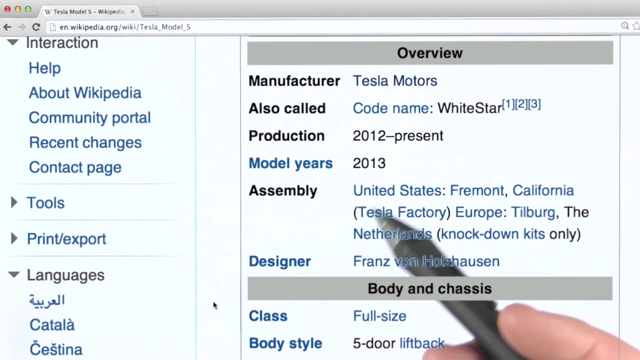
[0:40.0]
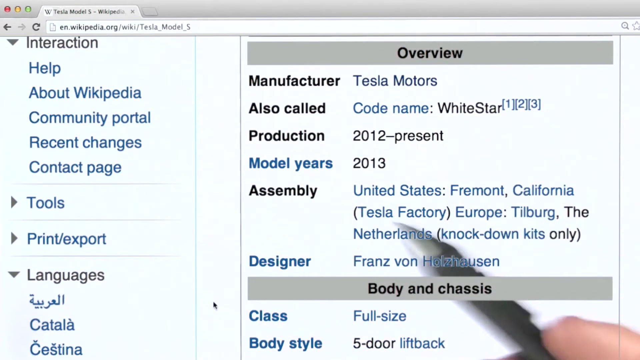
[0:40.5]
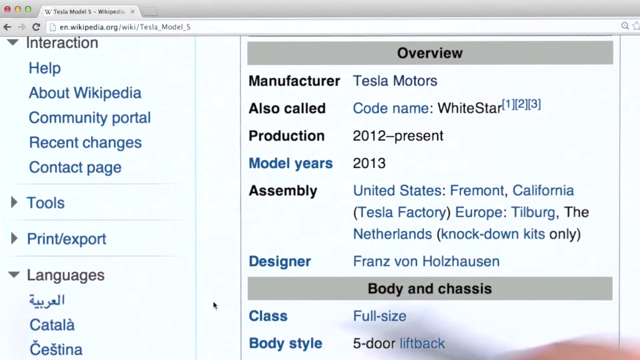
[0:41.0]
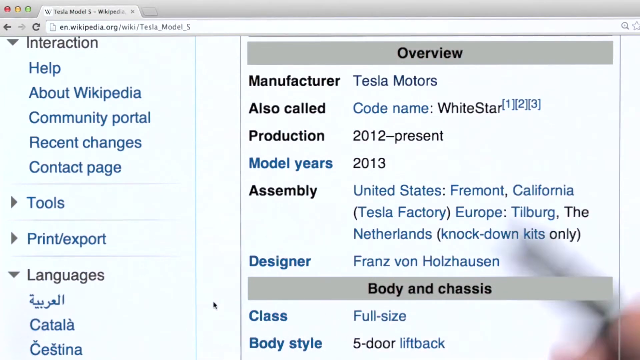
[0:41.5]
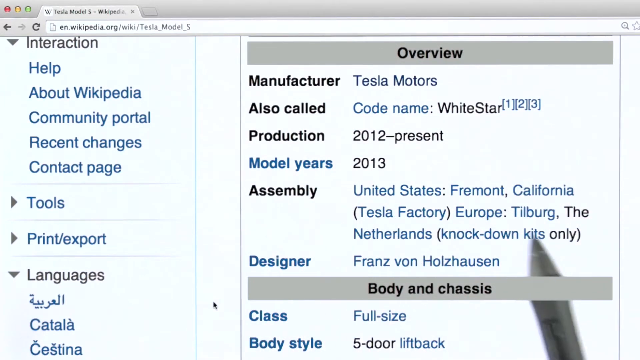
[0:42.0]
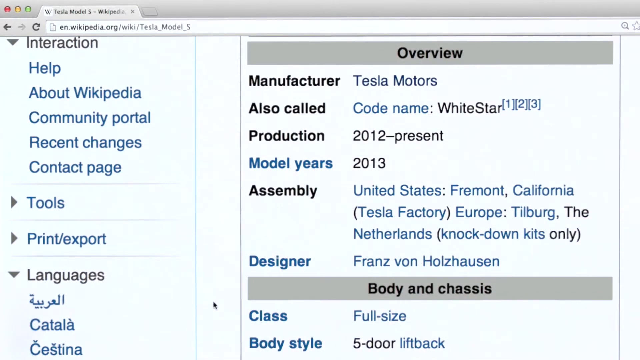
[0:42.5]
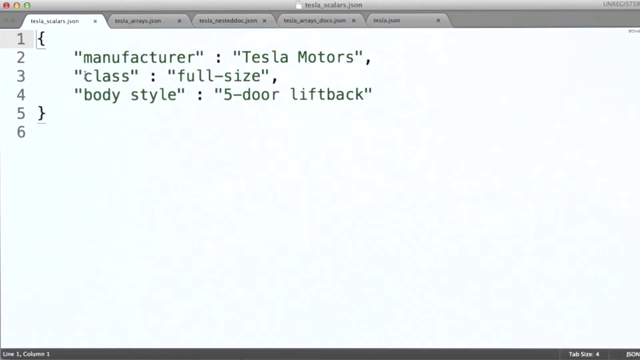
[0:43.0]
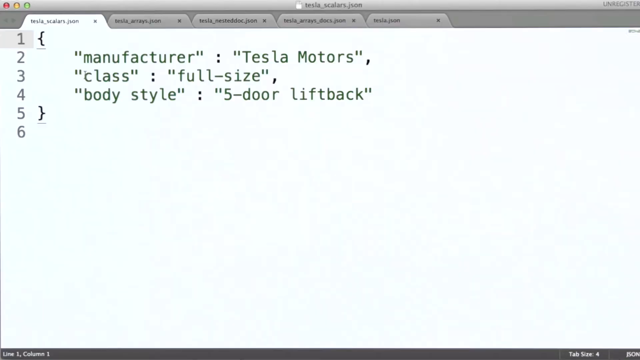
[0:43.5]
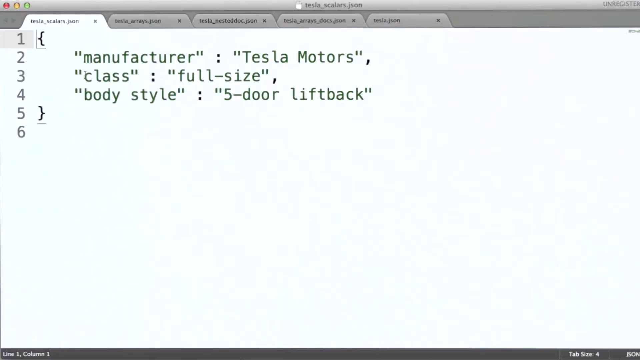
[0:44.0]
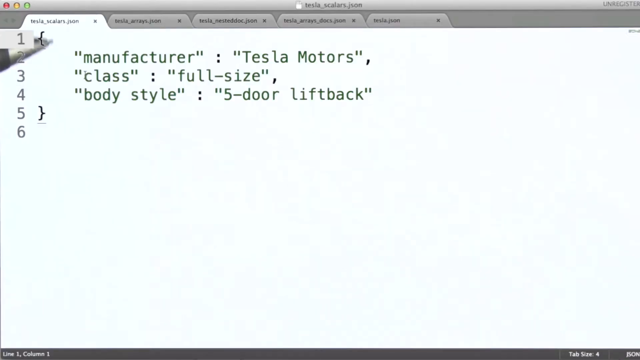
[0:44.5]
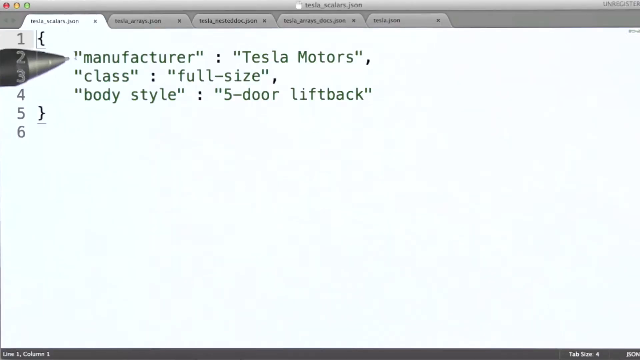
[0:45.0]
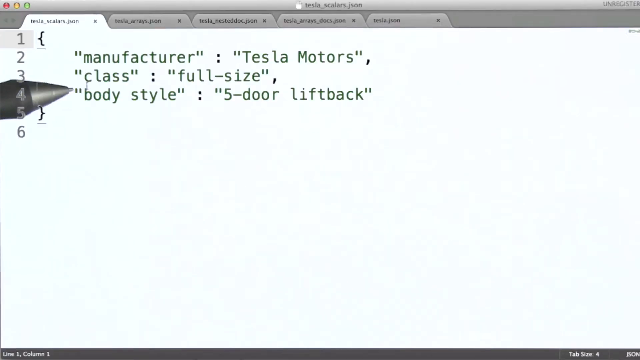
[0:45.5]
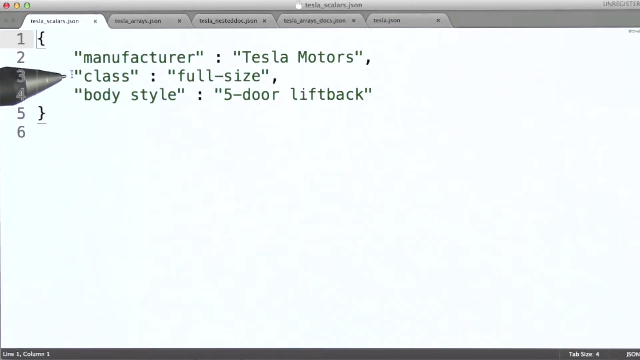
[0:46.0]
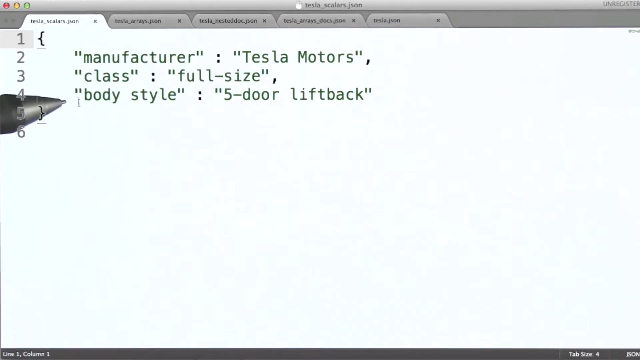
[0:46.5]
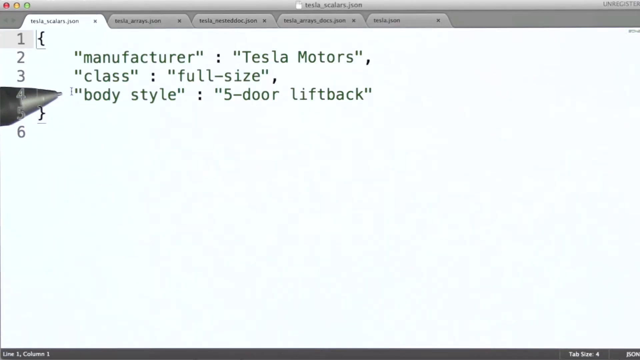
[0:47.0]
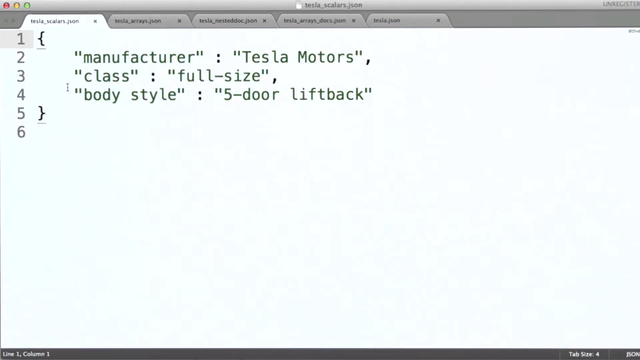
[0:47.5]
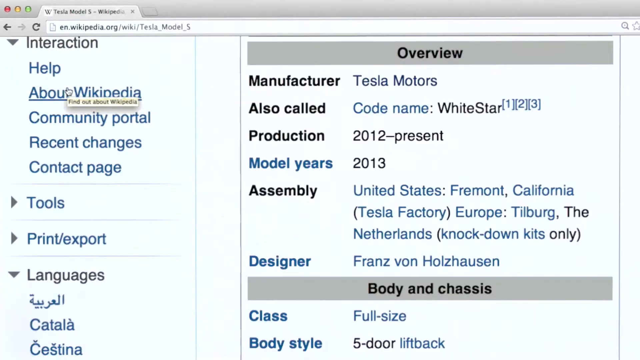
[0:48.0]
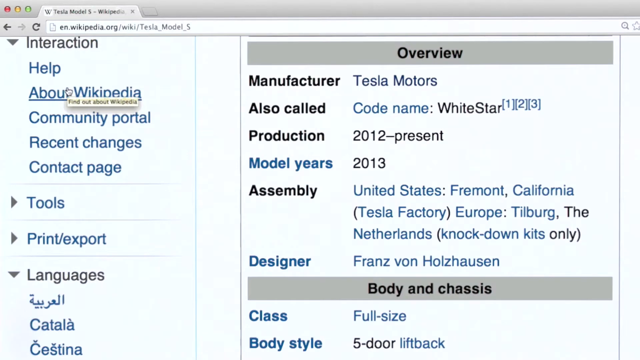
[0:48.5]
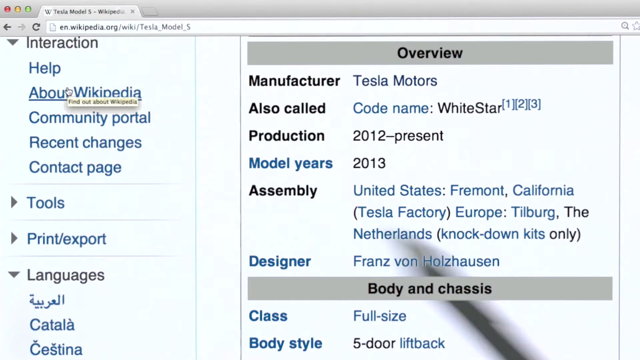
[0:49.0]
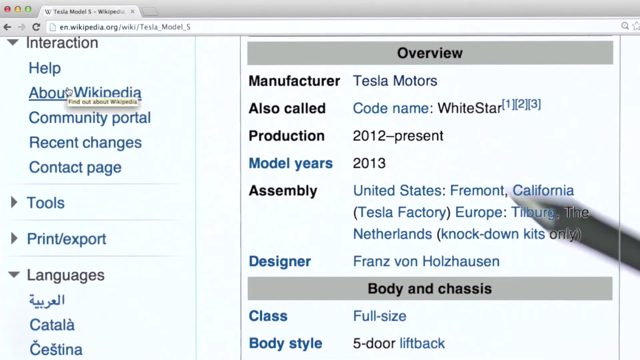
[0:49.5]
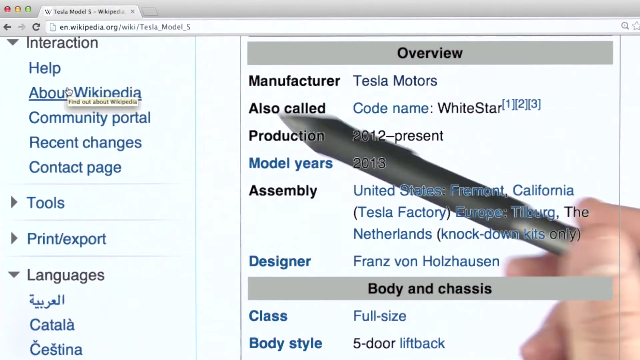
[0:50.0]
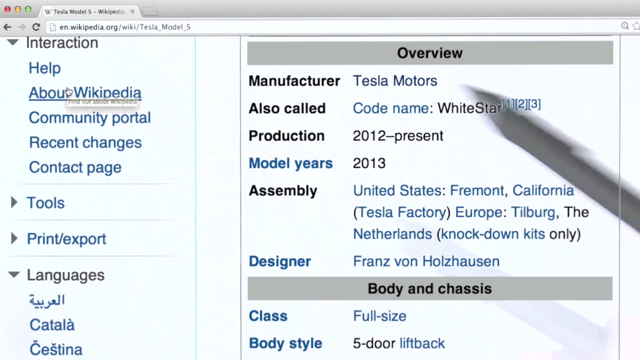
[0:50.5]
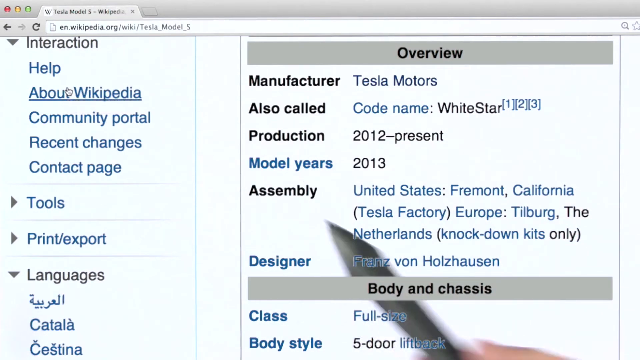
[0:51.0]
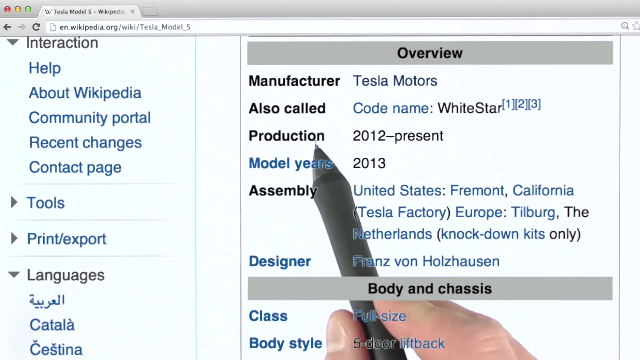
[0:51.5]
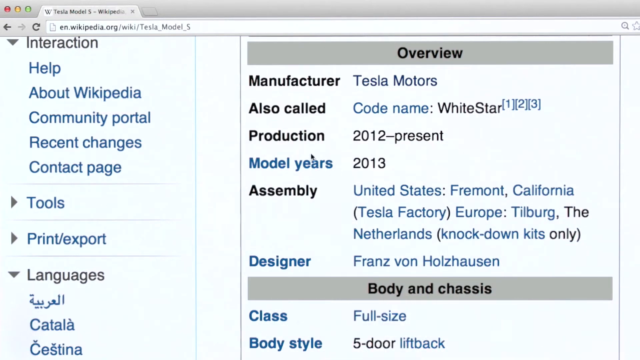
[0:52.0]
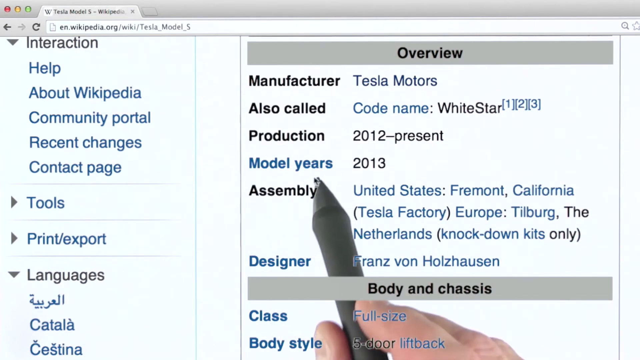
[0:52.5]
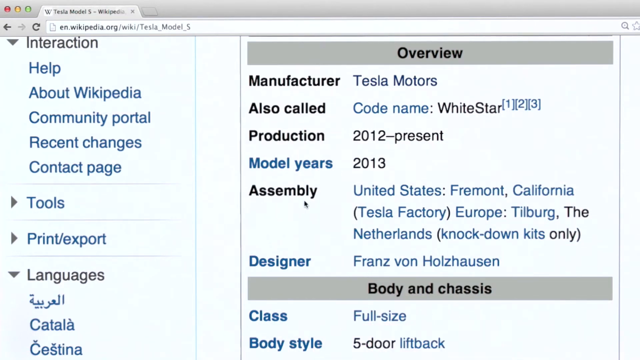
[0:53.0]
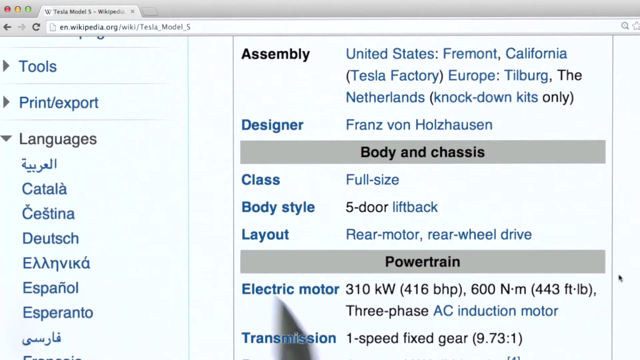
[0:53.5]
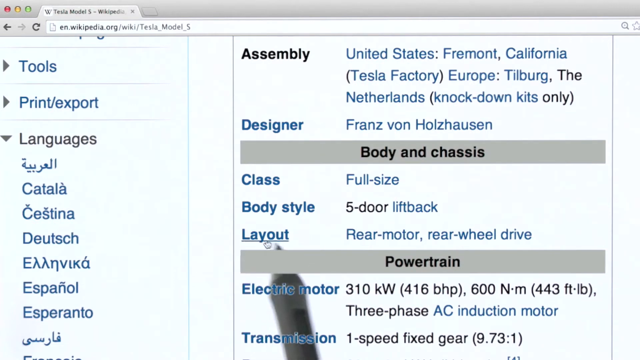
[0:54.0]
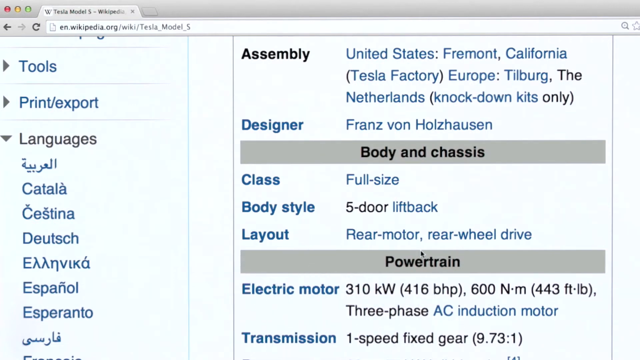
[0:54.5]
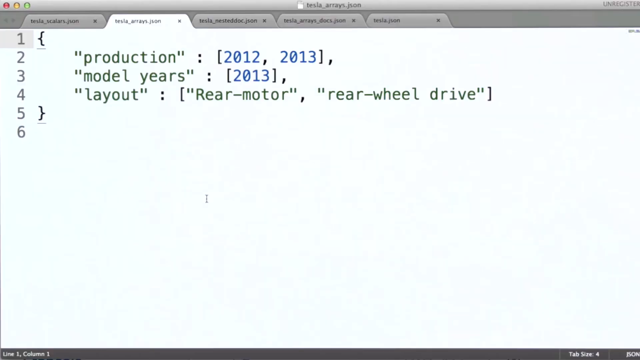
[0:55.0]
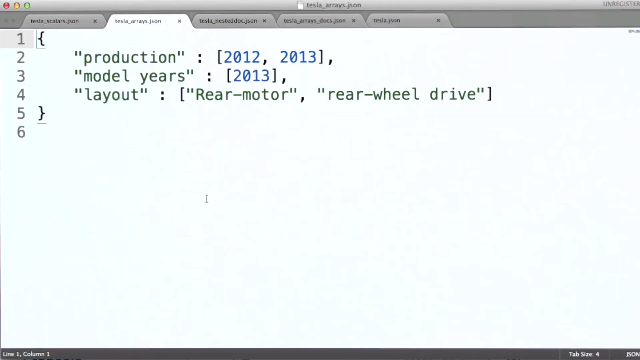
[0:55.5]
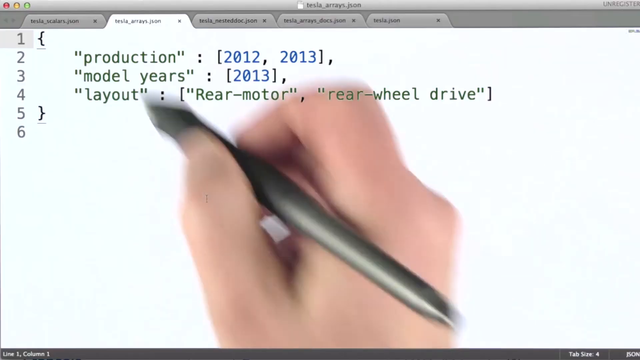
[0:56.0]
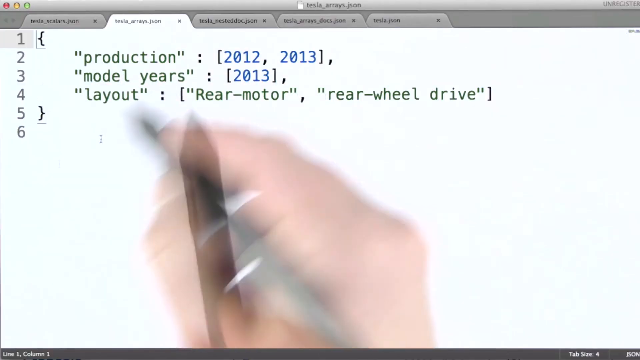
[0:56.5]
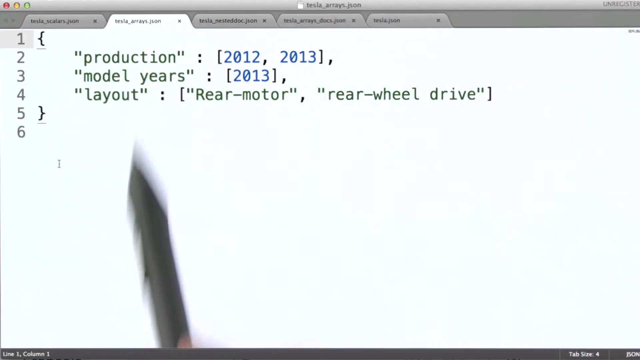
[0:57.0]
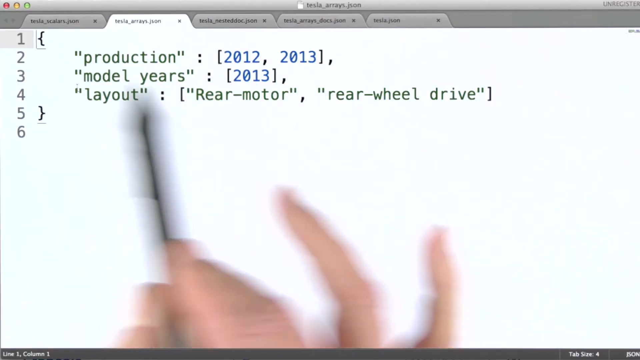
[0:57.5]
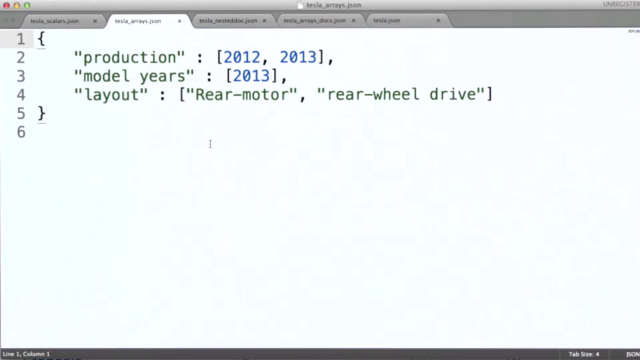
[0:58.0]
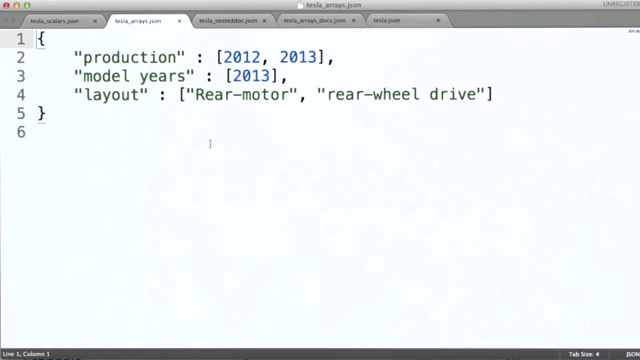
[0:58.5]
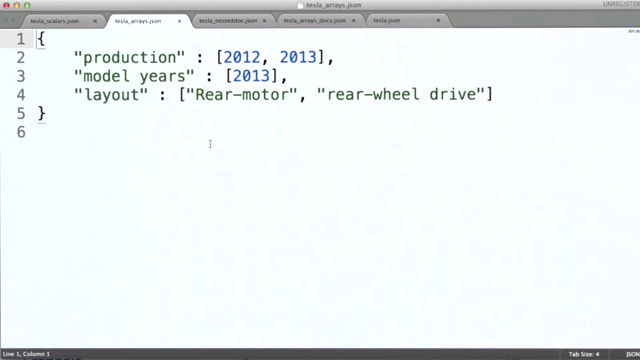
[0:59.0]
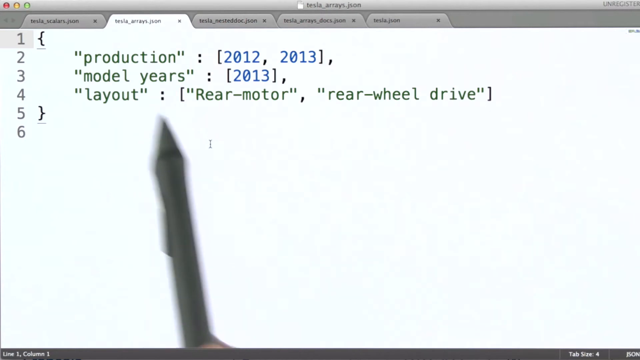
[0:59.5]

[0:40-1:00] The person continues interacting with the Wikipedia page for the Tesla Model S. On the left are the Wikipedia menu options "interaction", "help", "about Wikipedia", "community portal", "recent changes" and "contact page", with drop-downs for "tools", "print/export" and "languages". On the right, the overview lists the manufacturer "Tesla Motors", "also called" "codename Whitestar", production "2012 through present", model years "2013", and assembly "United States, Fremont, California, Europe, Tilburg, the Netherlands", followed by a parenthetical beginning "knock-down". The designer is listed as "Frans Van". Then what looks to be a programming screen with lines of code appears: "manufacturer" and "Tesla Motors" in quotation marks, then "class" with "full size", and on the next line "body style" with "five-door liftback", all in quotation marks. The view apparently moves from the Wikipedia page to pages of code.